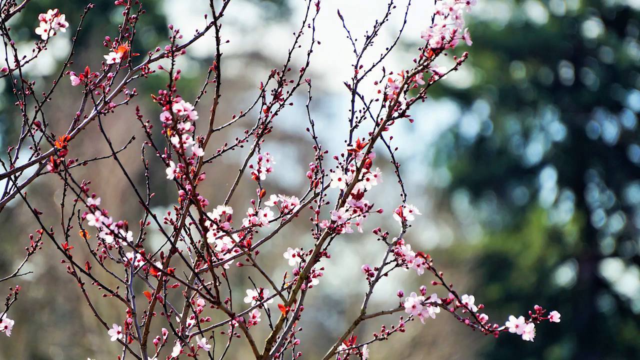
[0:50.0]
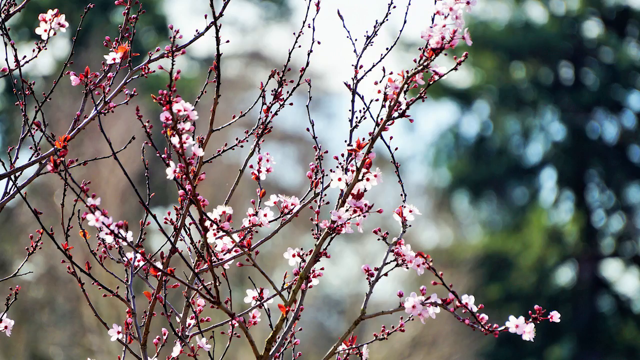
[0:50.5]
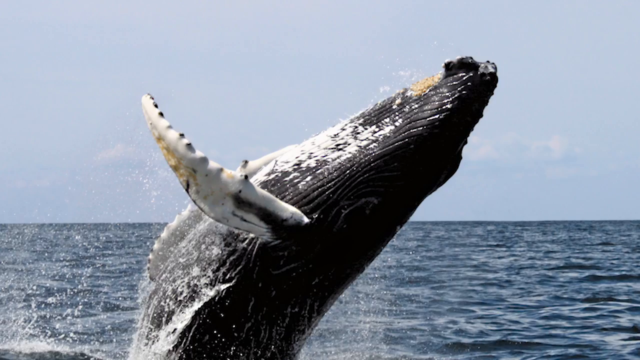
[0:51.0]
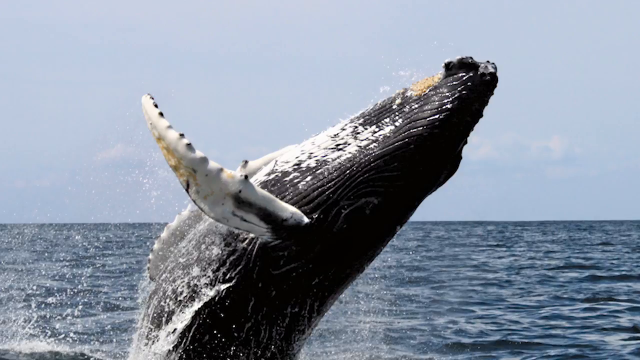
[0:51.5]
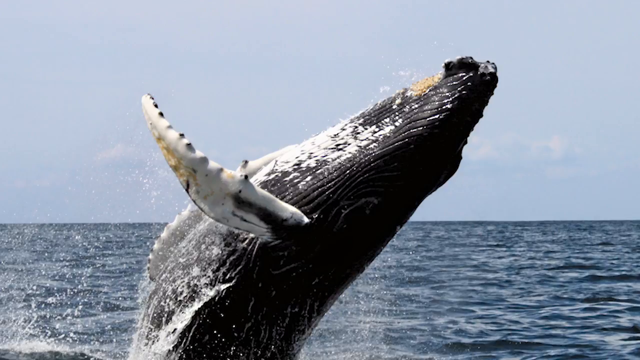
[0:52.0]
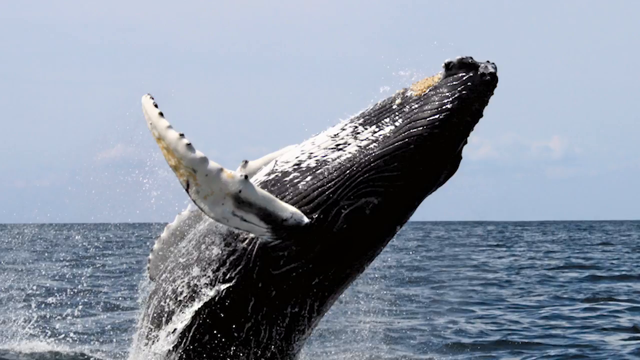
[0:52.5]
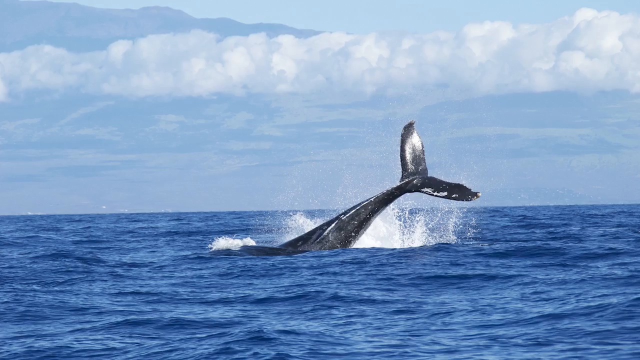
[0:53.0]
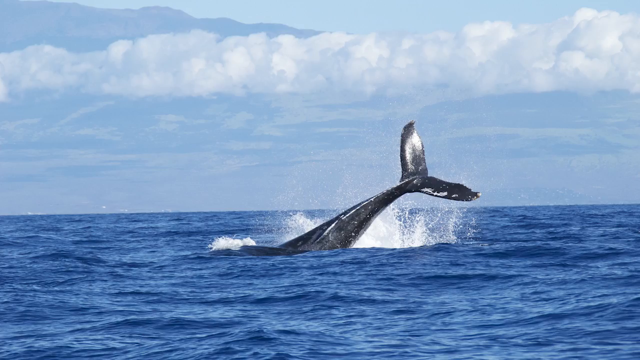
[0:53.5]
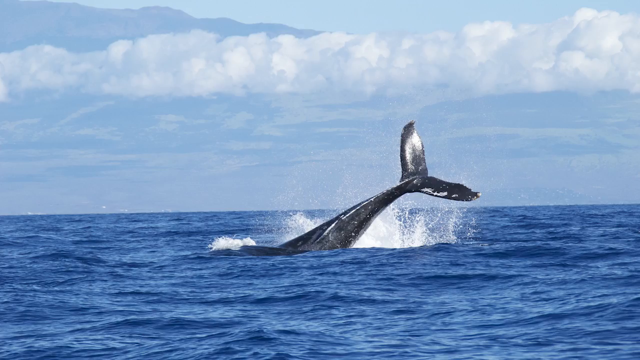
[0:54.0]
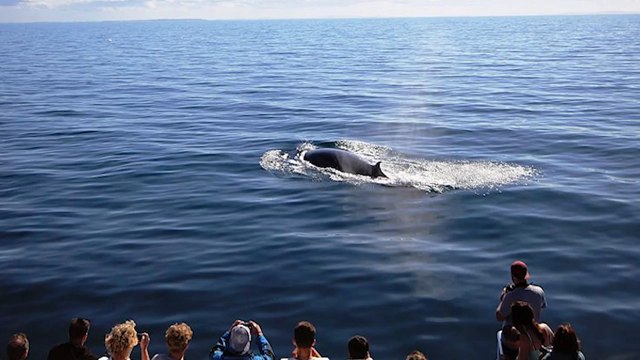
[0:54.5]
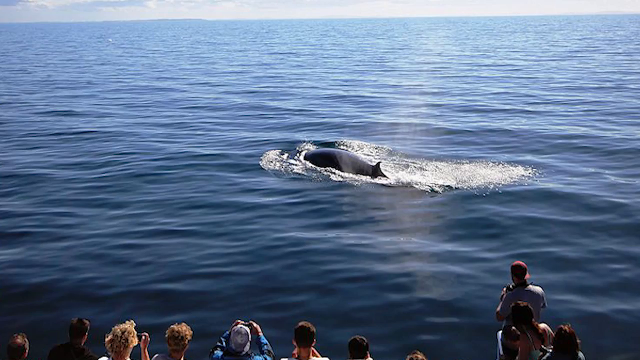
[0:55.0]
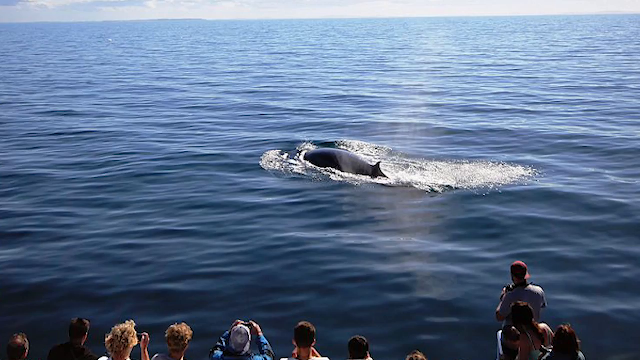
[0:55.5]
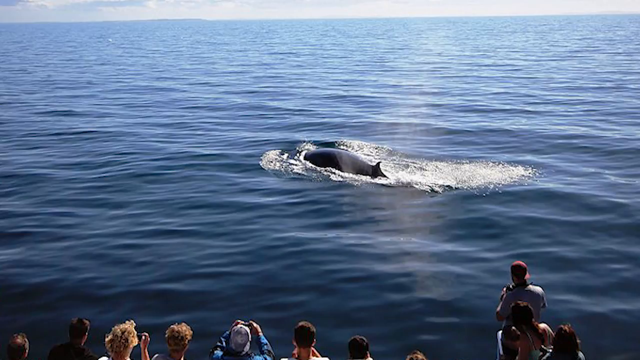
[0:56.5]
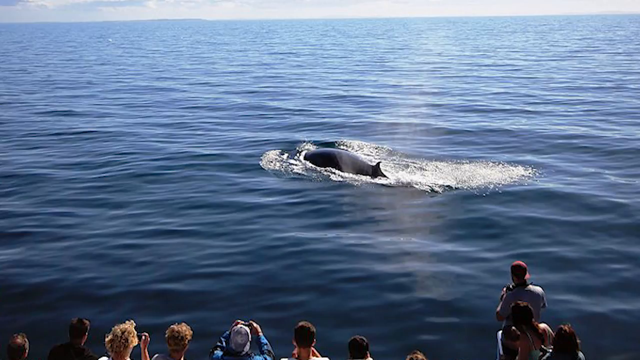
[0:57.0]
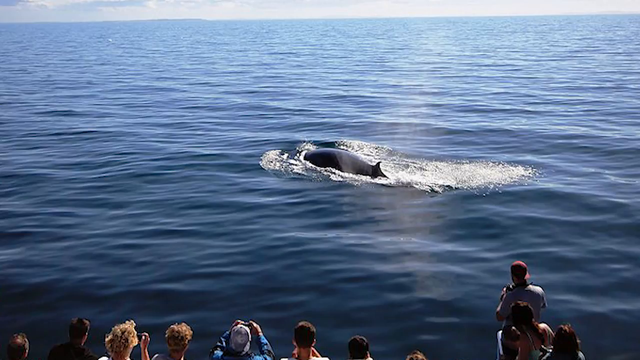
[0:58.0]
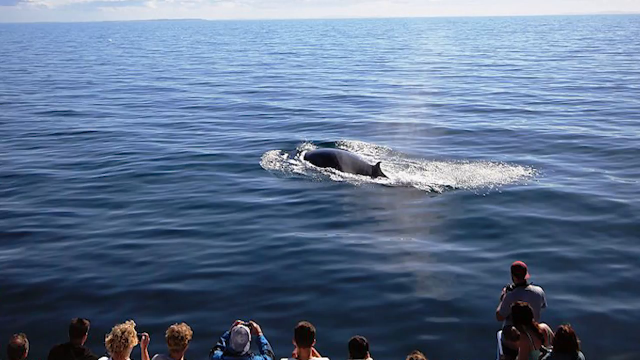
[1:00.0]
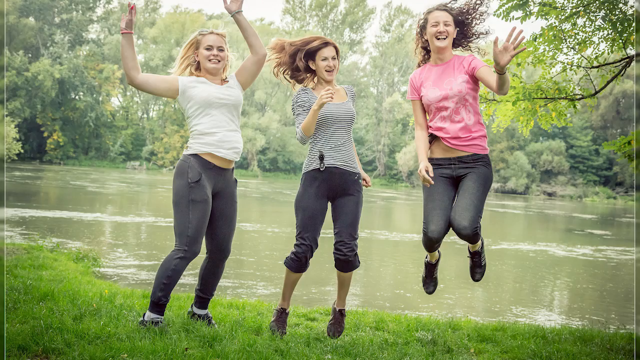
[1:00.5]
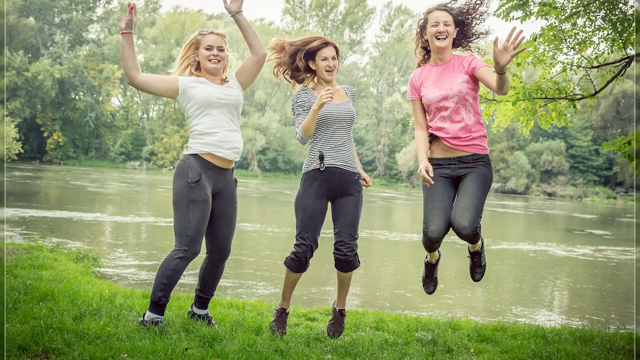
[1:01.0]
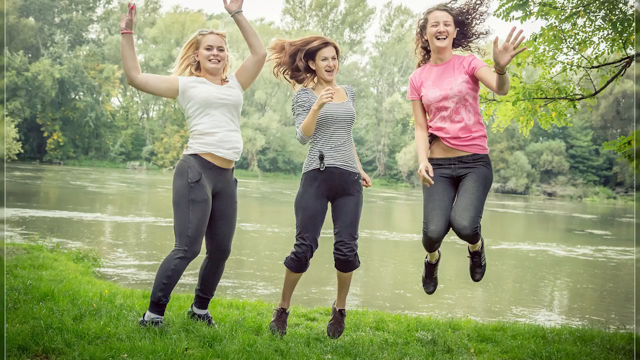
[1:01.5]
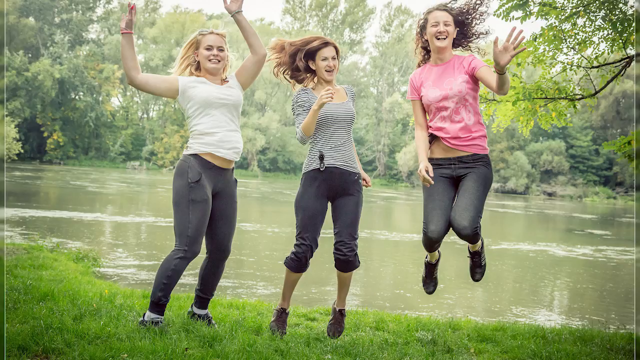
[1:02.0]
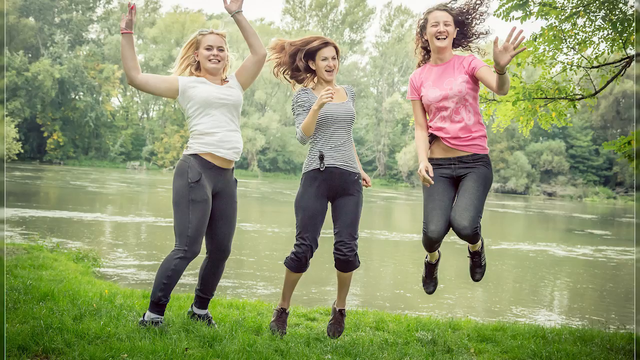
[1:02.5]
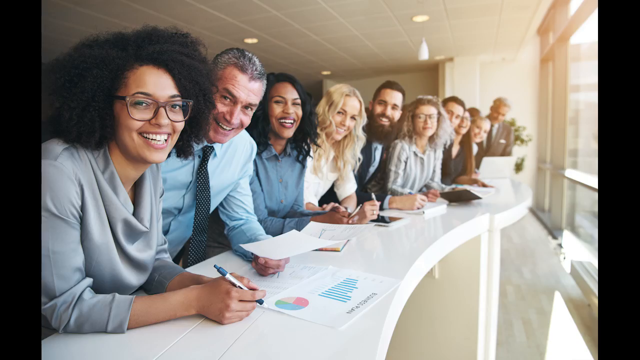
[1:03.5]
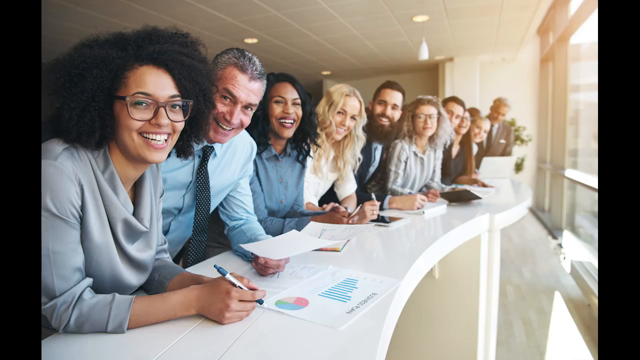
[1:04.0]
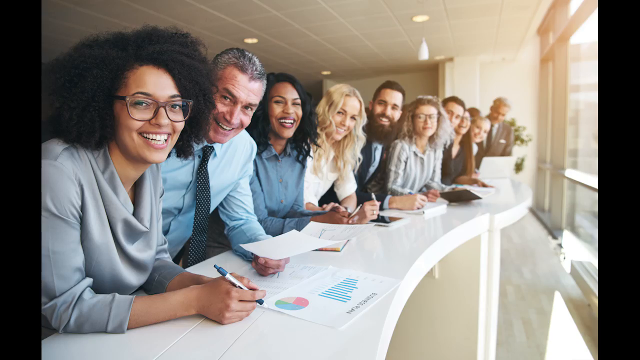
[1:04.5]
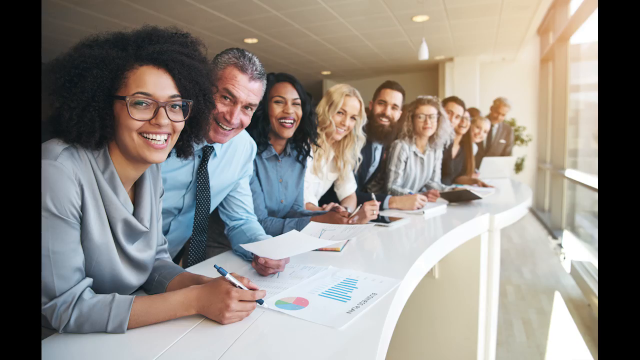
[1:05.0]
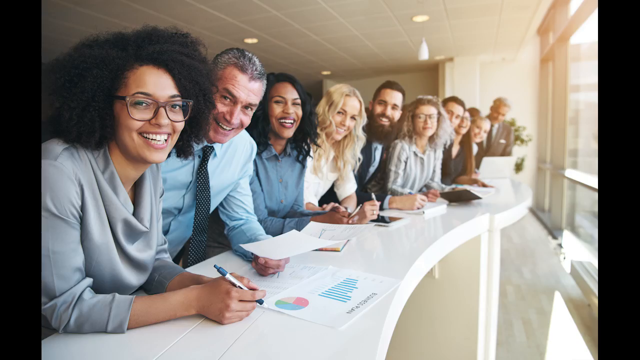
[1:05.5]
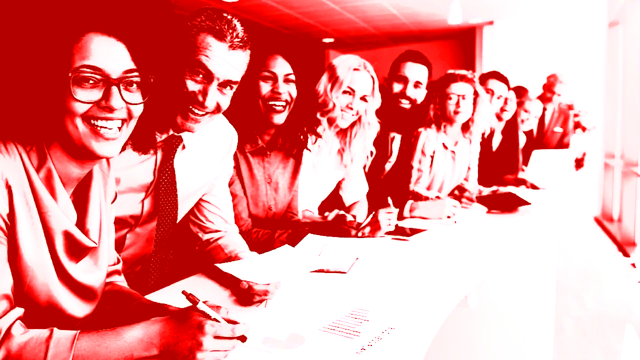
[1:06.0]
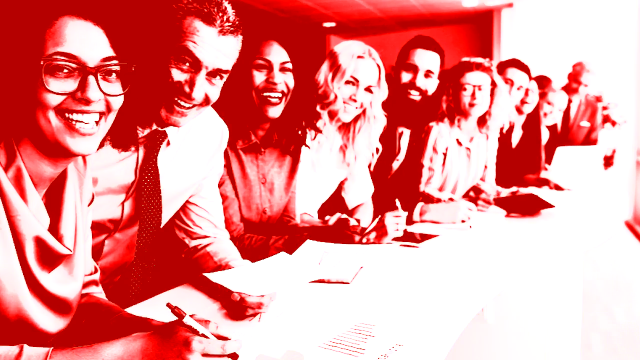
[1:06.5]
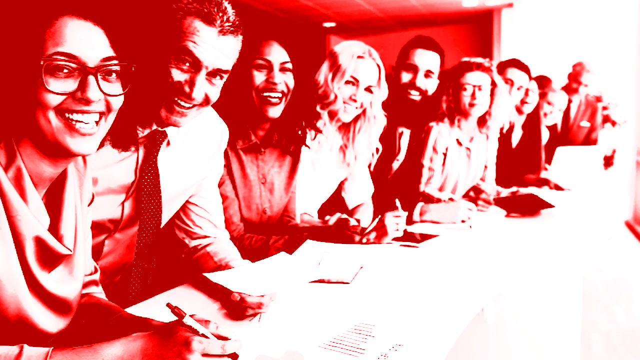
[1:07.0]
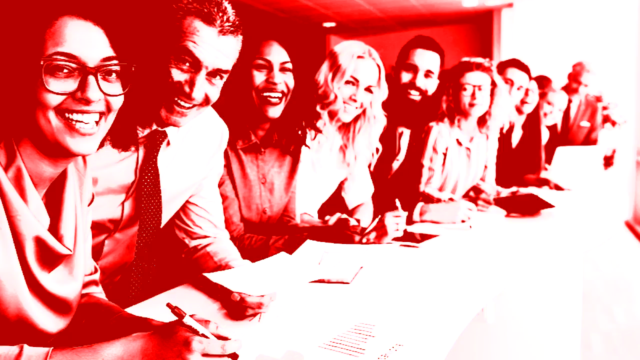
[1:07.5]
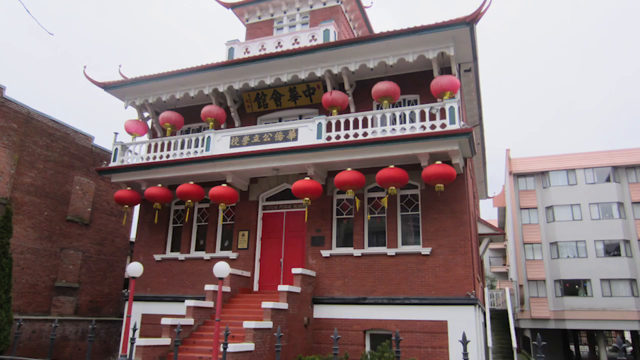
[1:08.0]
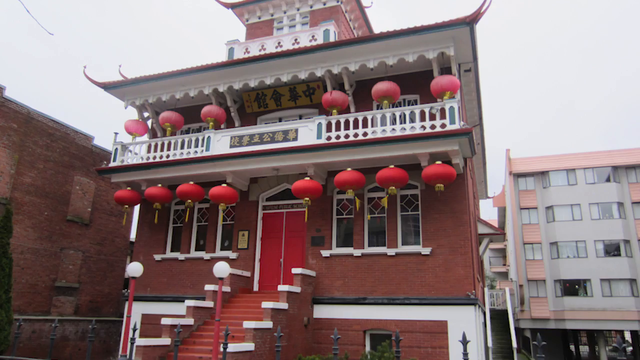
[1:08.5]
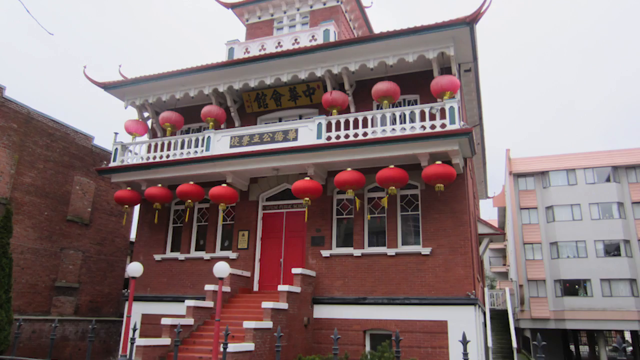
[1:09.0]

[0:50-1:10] Branches with pink flowers on them appear. The video cuts to a whale jumping out of the ocean, then to another scene where the whale seems to be going back into the ocean, with only the fins visible. Next is what looks like a portion of what could be a shark, with fins sticking out of the water. Three people jump, and behind them is a body of water with a bunch of vegetation around it. People who seem to be inside an office pose for a picture, all wearing office attire. Then the exterior of a building appears that seems to have red globes hanging from the ceiling, along with a red door; the building is kind of a burgundy and white color.